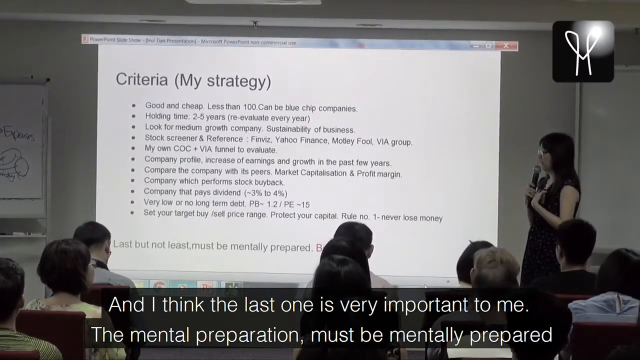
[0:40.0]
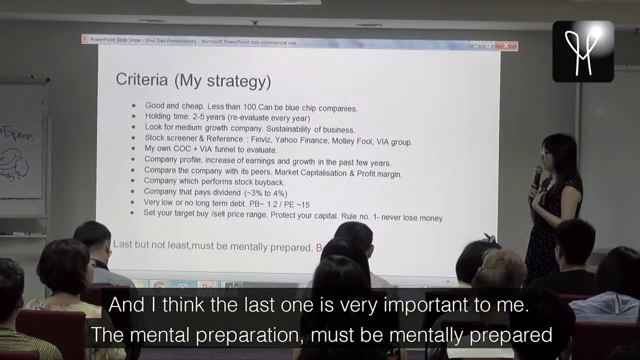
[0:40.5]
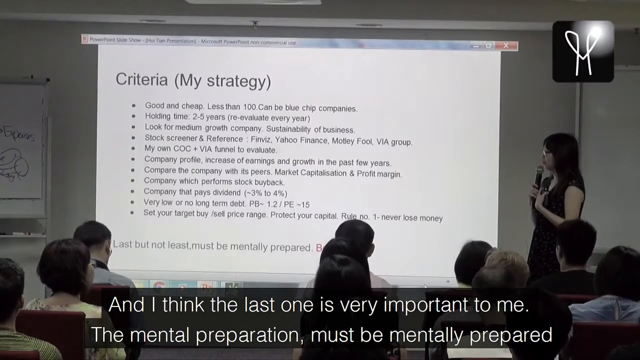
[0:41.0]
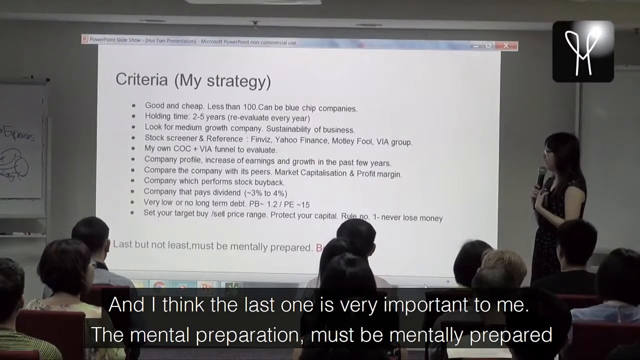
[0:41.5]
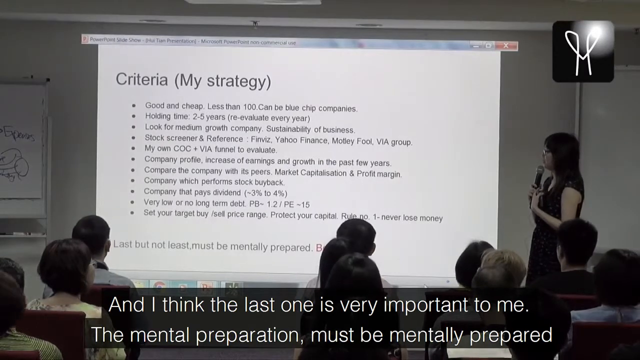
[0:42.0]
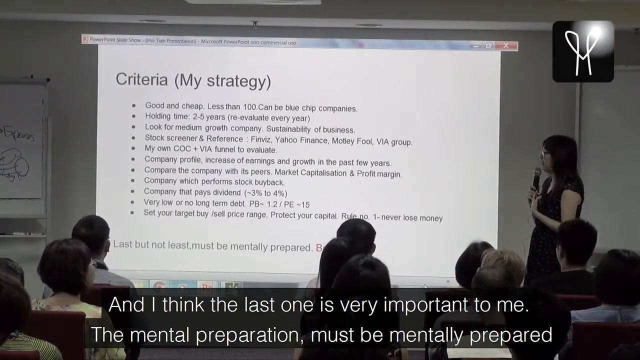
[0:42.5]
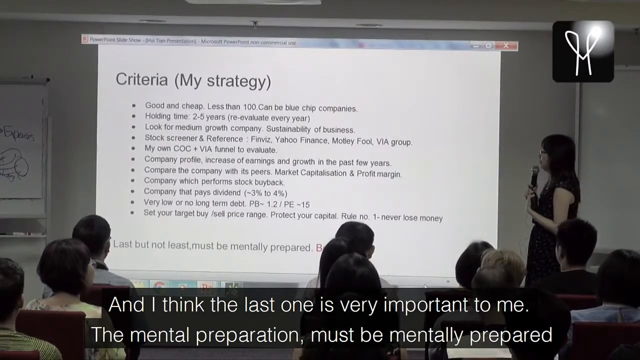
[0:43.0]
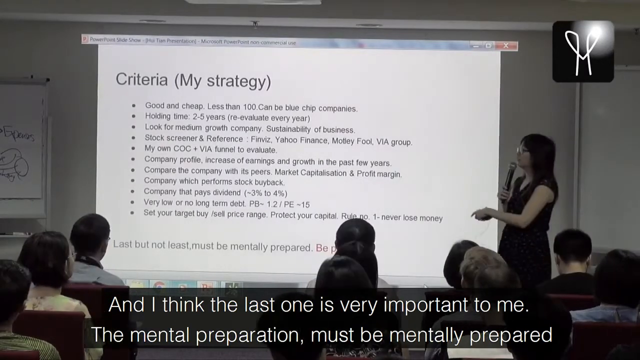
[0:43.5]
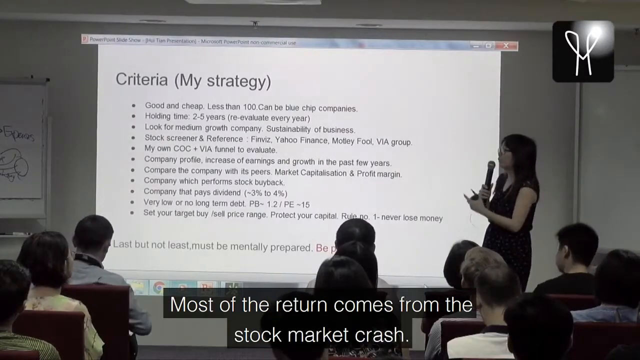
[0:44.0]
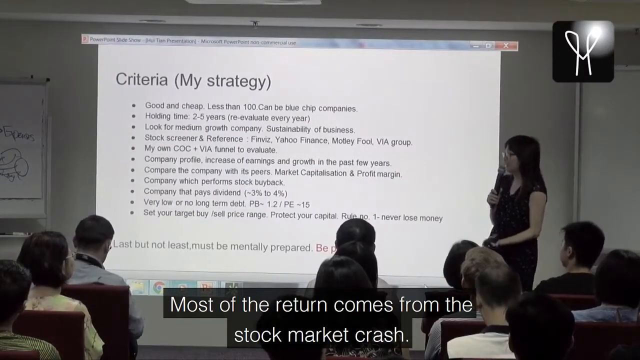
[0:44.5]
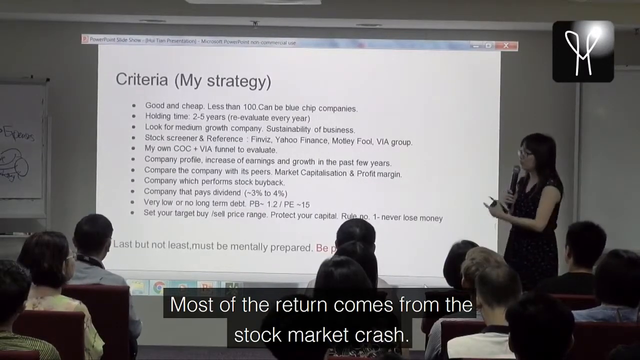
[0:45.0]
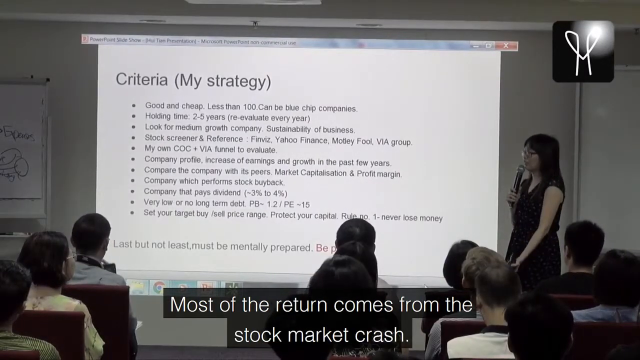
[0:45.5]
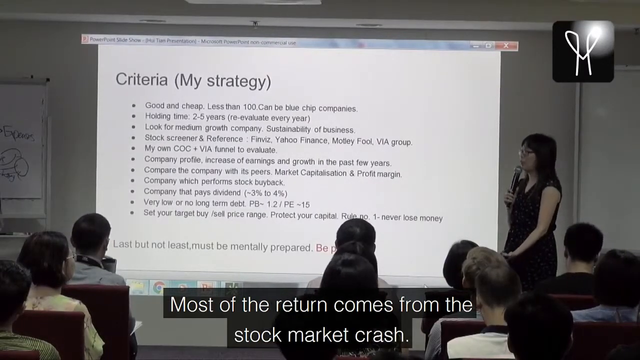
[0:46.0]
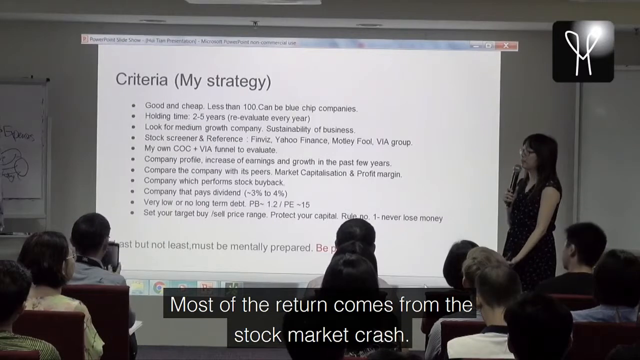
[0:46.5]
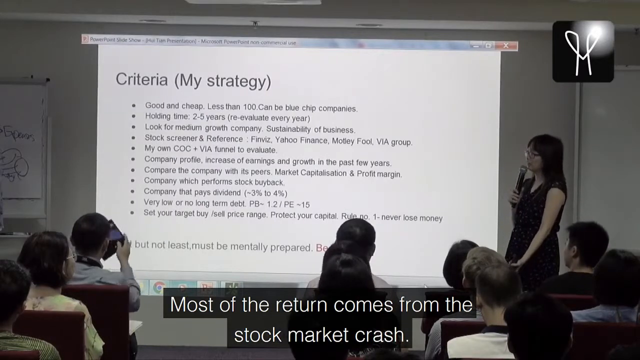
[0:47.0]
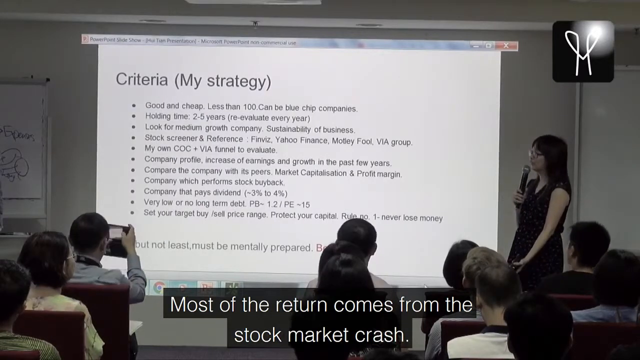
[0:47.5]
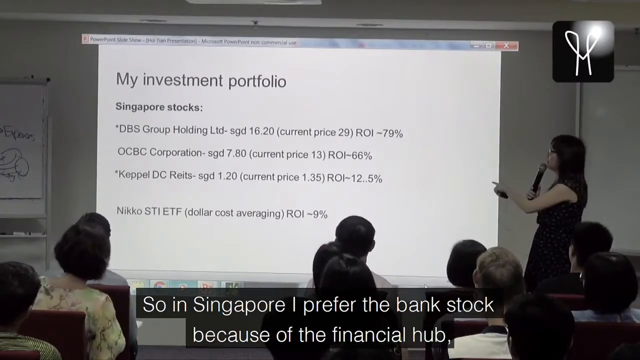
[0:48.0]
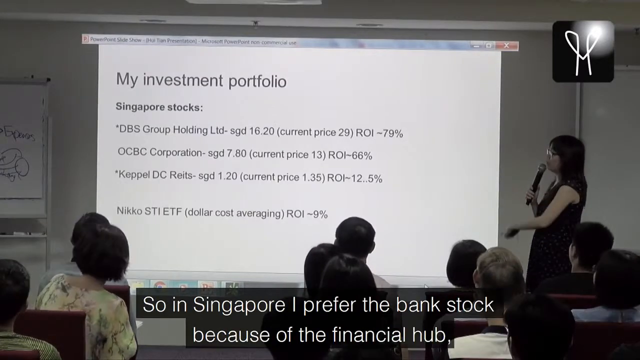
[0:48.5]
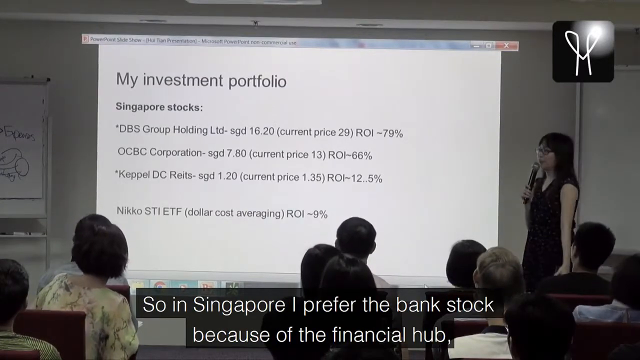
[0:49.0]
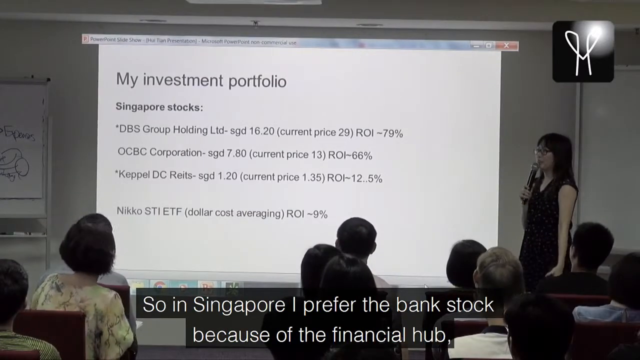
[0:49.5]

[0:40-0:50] The presenter is still talking about the presentation, showing it, and then turns her body a bit and seems to be talking to someone on the other side of the room. She gestures a little, and a man in the first row on the left, the first person in that row, seems to be filming or taking pictures of the presentation with his cell phone. The presenter seems to have changed the presentation screen, which now shows "My Investment Portfolio". It is about Singapore stocks and mentions a few companies, such as DBS Group Holding, OCBC Corporation and Keppel DC Reits, as well as Nikko STI ETF. The presenter gestures a little as she talks about those points.